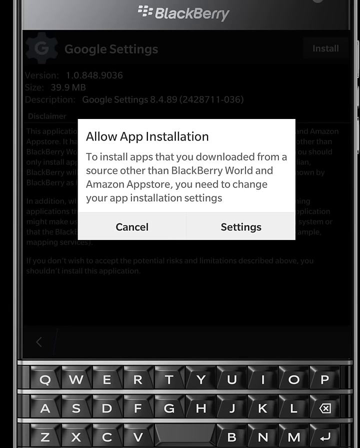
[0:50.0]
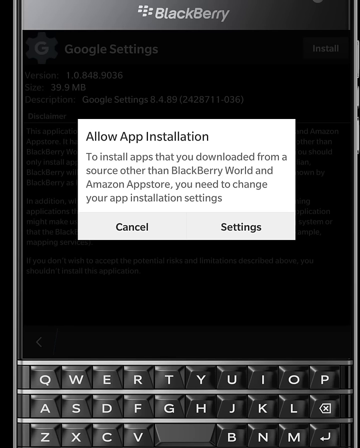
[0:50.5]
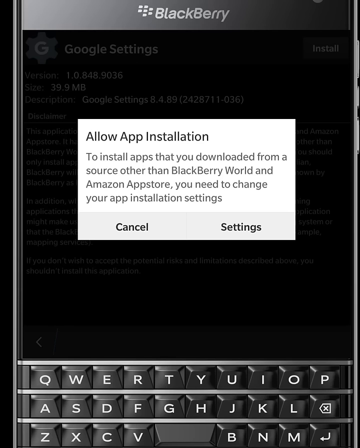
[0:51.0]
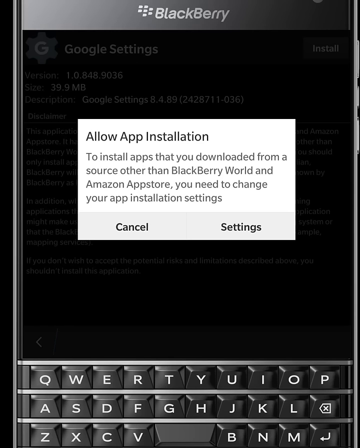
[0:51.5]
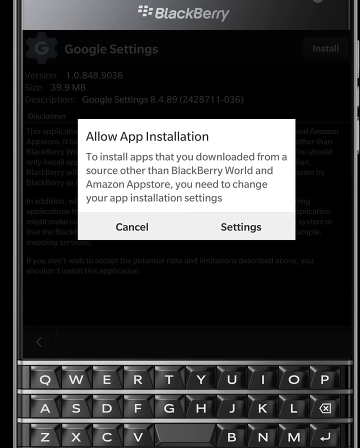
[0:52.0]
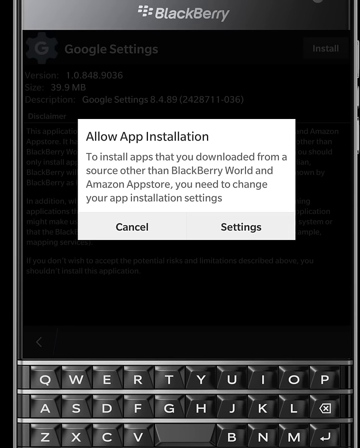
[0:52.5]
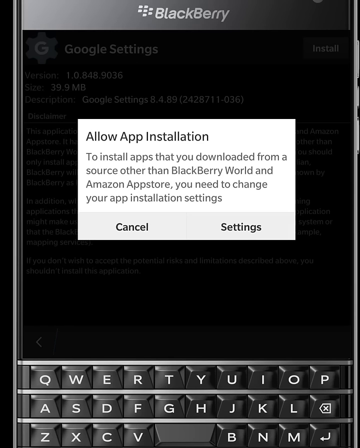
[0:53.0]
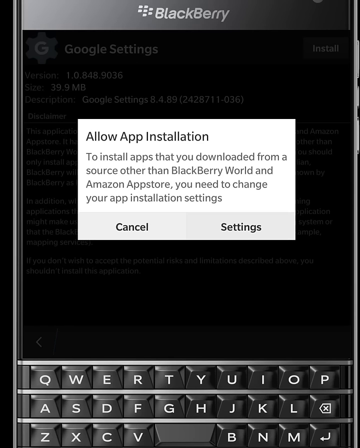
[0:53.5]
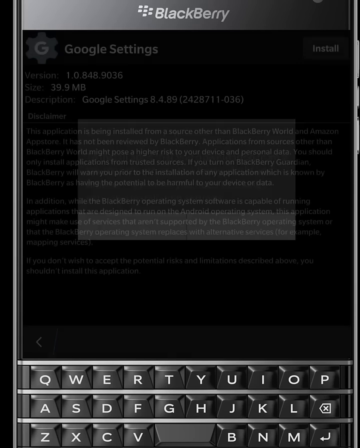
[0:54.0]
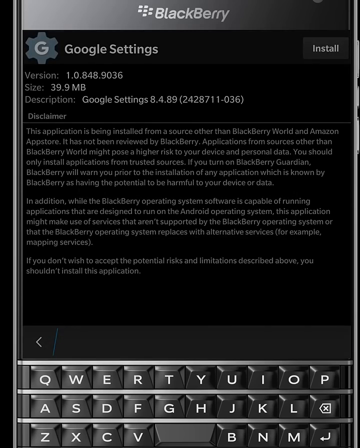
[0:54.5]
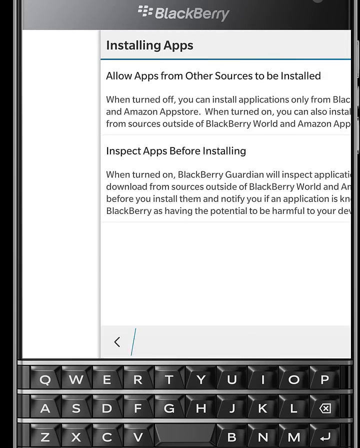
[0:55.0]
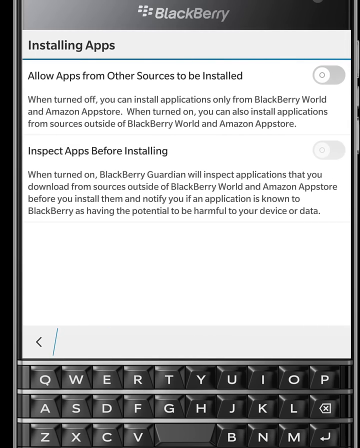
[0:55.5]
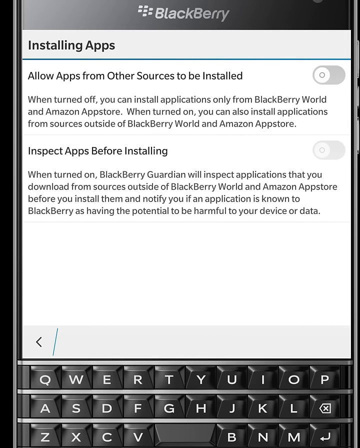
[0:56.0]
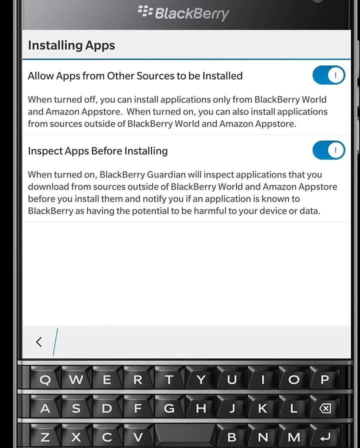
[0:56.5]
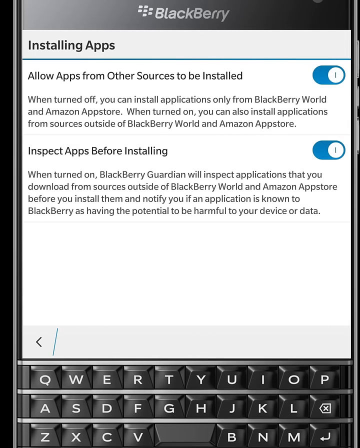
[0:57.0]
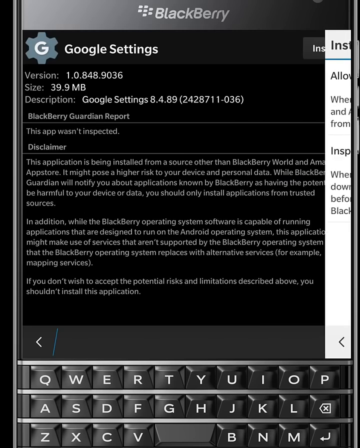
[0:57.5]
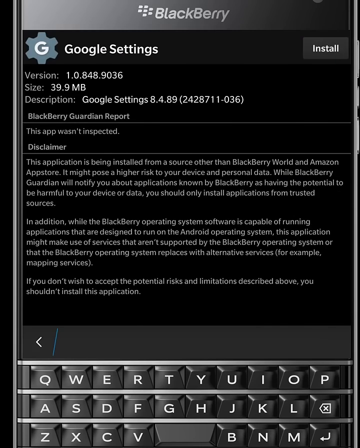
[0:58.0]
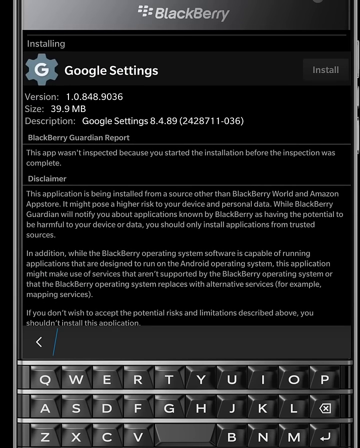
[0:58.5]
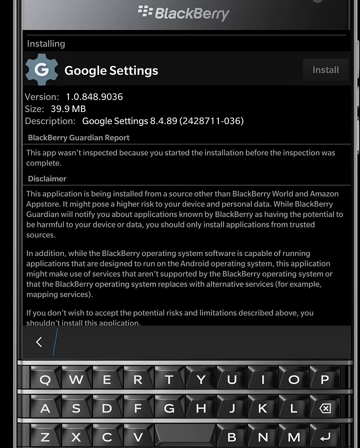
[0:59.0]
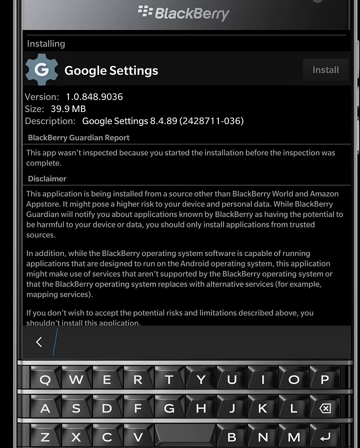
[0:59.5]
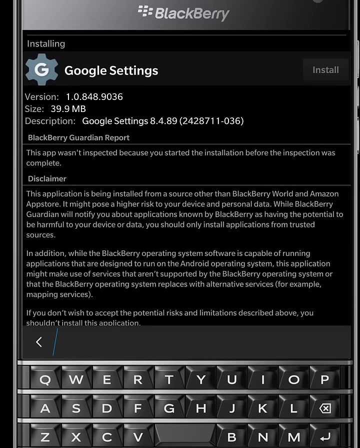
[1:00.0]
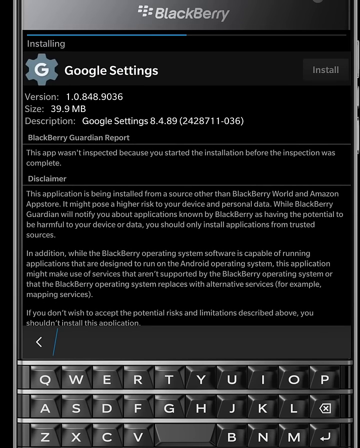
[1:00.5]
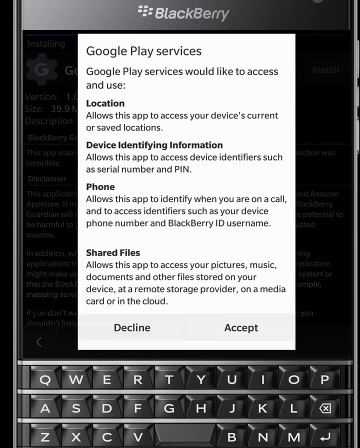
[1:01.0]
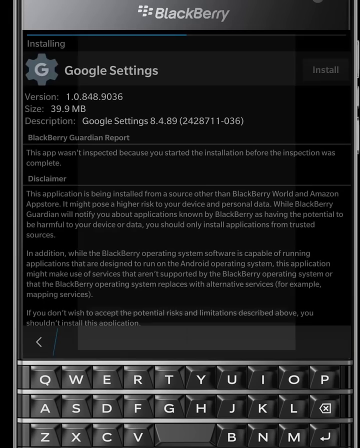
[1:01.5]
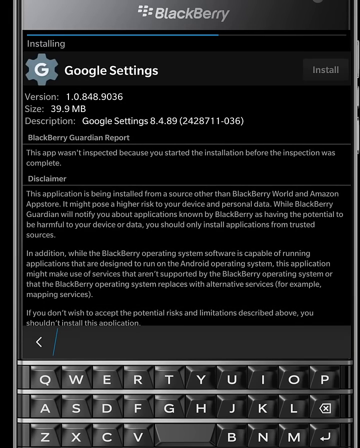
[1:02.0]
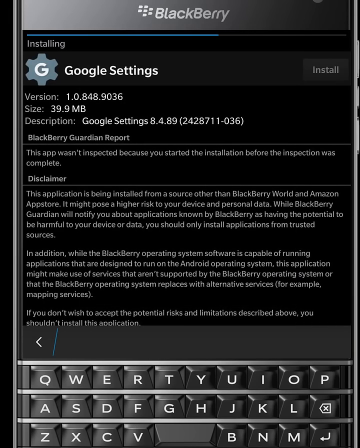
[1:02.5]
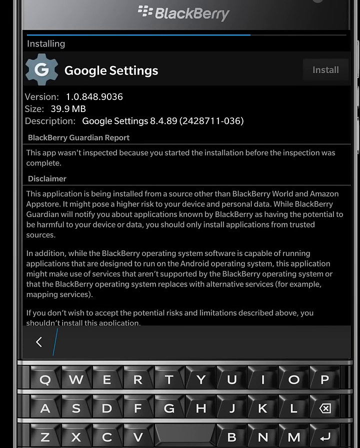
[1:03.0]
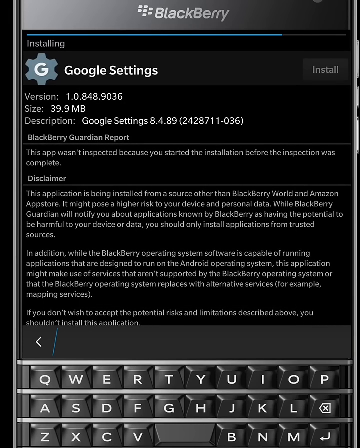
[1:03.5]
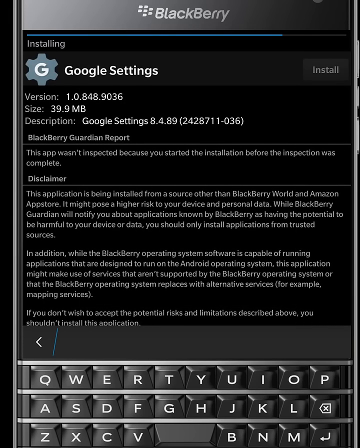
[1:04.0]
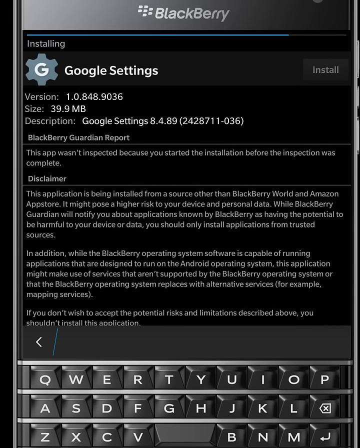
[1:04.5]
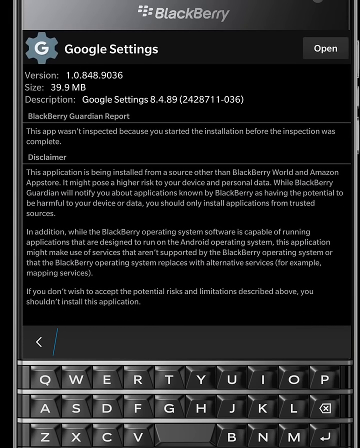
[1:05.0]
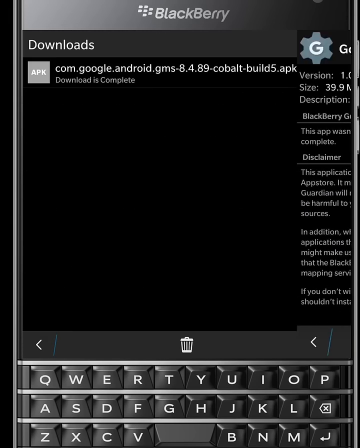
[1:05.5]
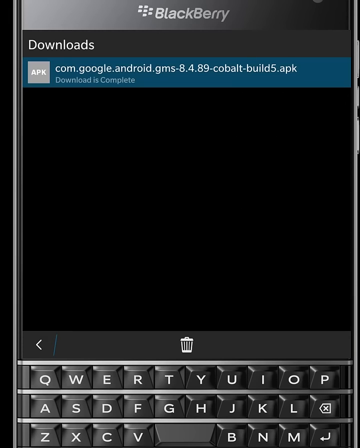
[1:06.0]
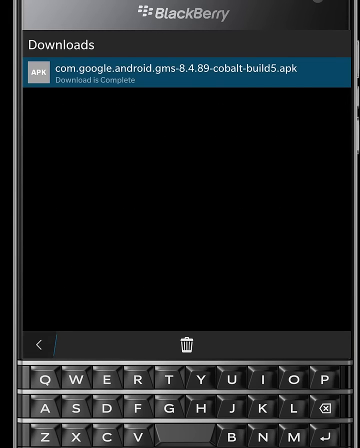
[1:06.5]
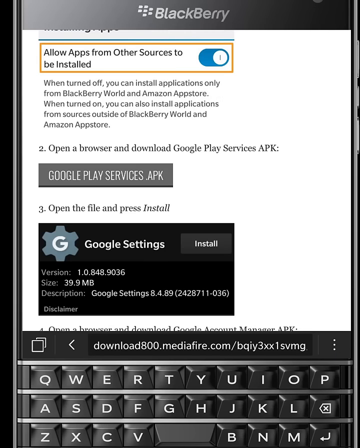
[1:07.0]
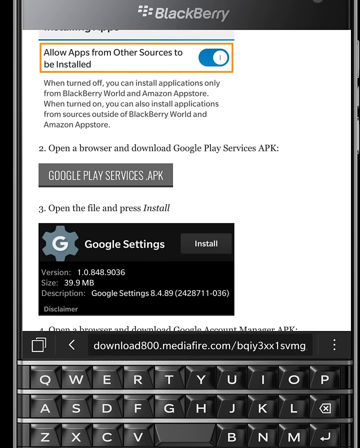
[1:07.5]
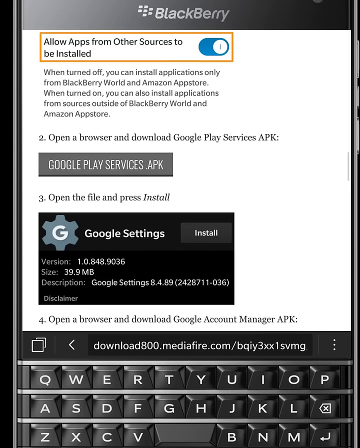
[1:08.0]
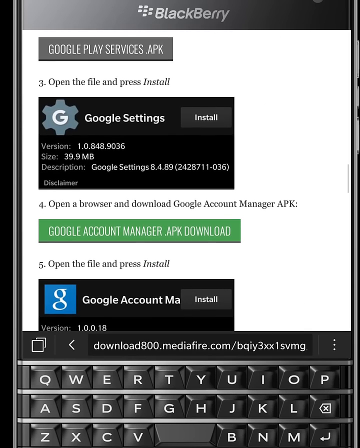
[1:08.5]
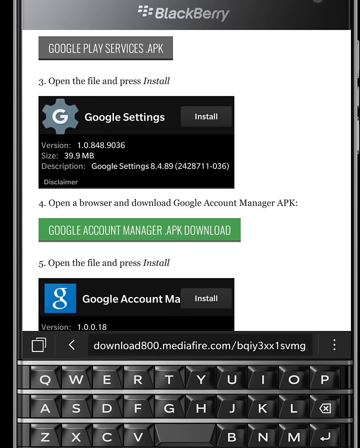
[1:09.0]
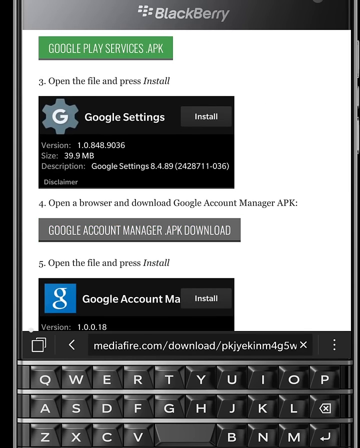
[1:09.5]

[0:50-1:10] The user turns on settings to allow the app, moving quickly through the screens. They go to the account manager, apparently to access some kind of testing app. Two options switch on with a single click. They look like they are downloading something from Google, and BlackBerry World and the Amazon App Store both appear. They seem to be making progress navigating the site.